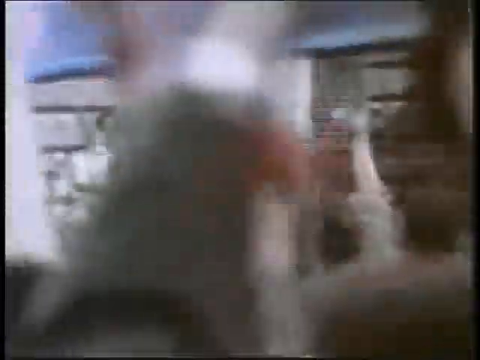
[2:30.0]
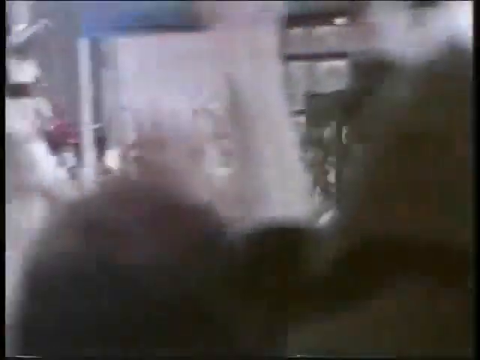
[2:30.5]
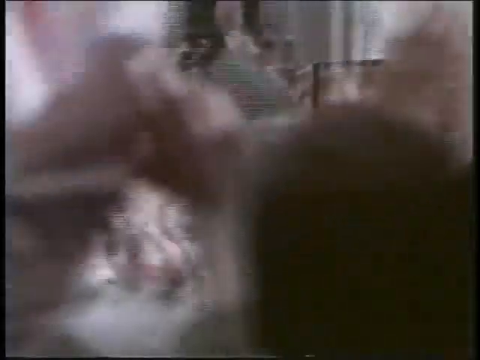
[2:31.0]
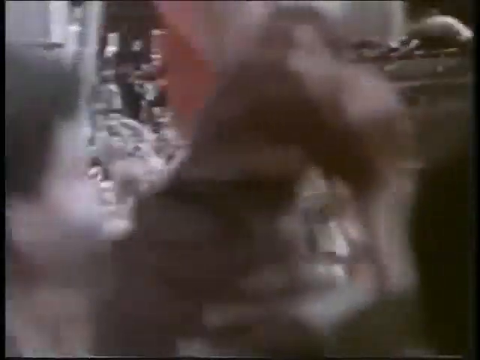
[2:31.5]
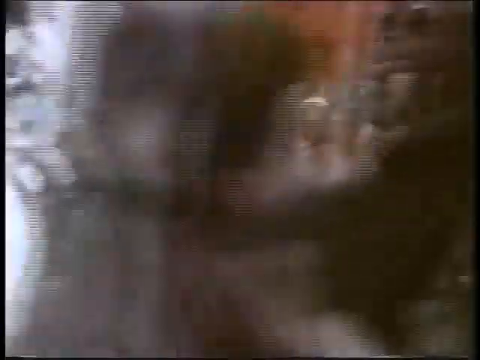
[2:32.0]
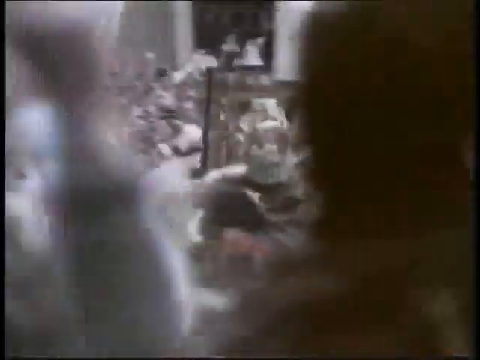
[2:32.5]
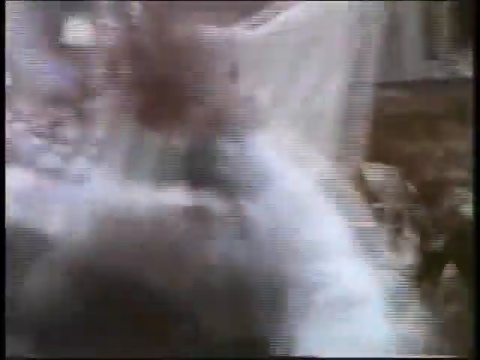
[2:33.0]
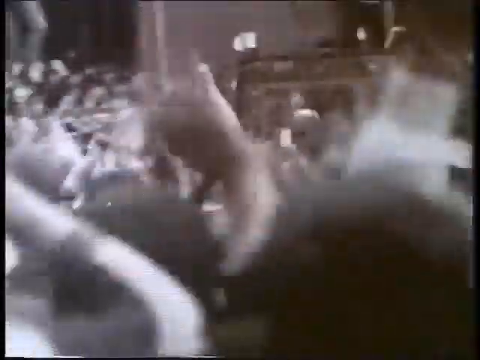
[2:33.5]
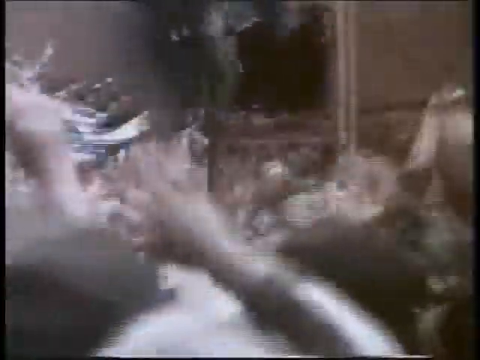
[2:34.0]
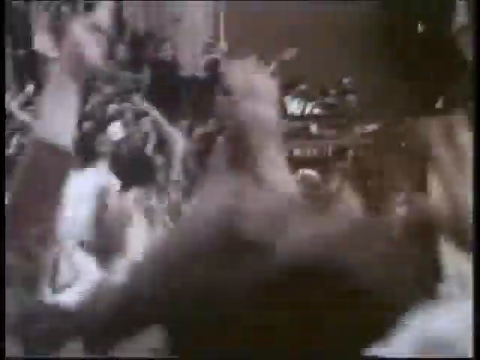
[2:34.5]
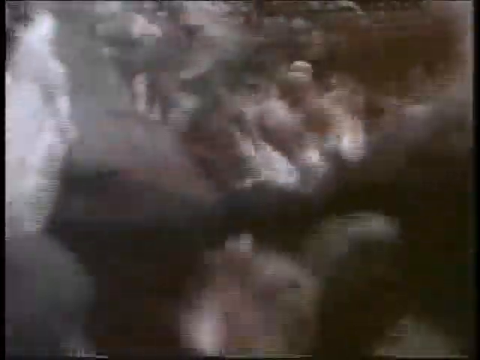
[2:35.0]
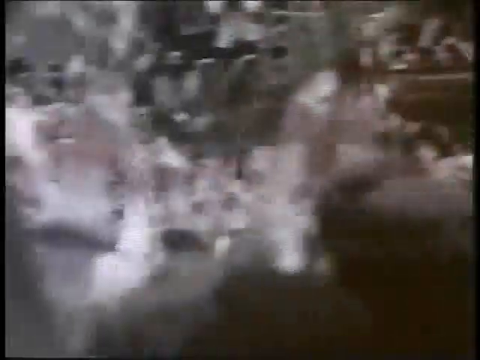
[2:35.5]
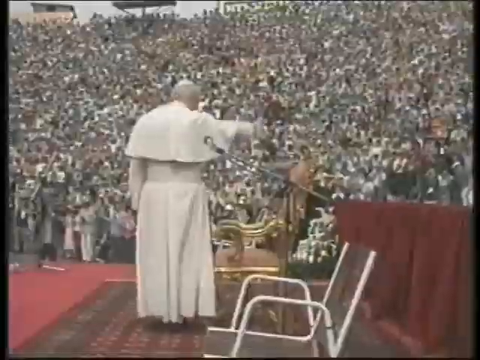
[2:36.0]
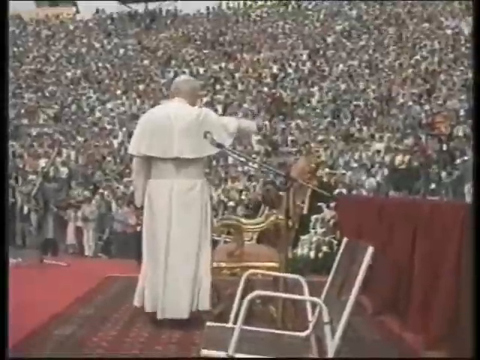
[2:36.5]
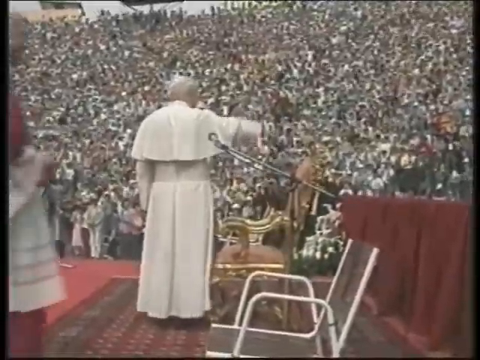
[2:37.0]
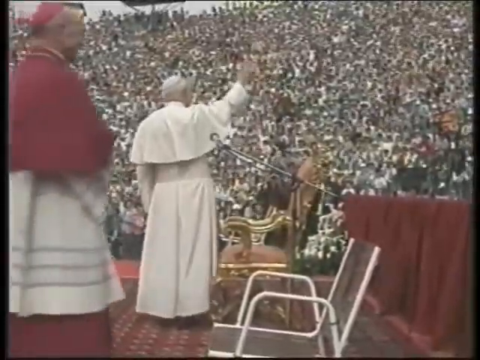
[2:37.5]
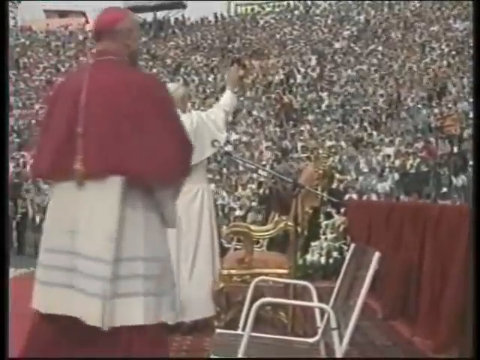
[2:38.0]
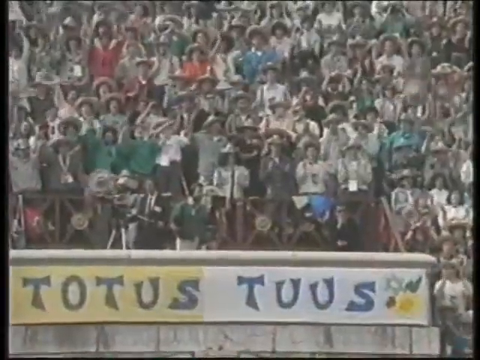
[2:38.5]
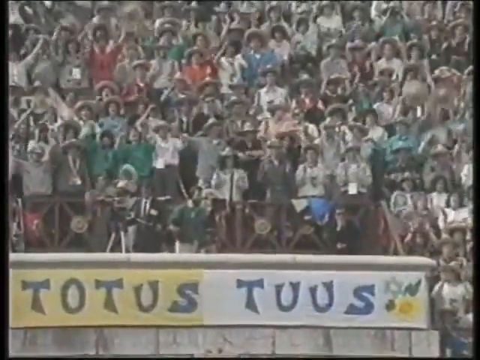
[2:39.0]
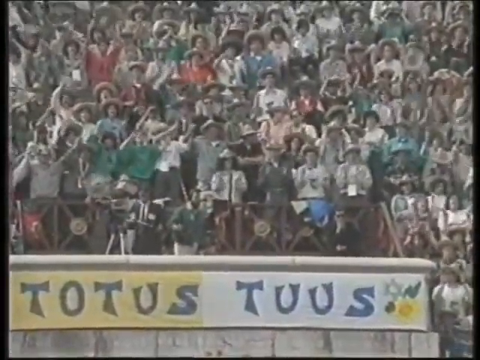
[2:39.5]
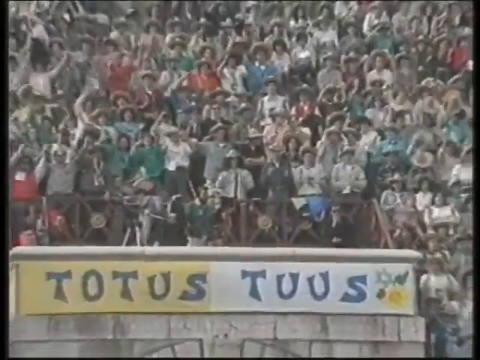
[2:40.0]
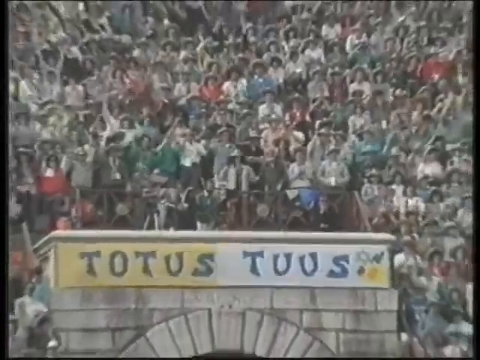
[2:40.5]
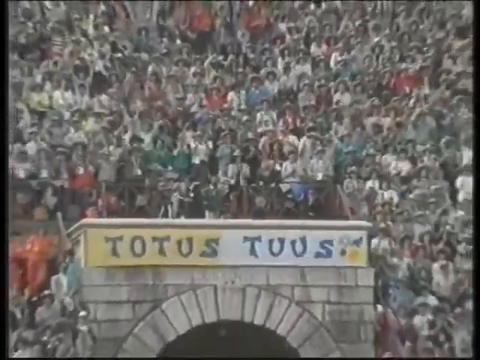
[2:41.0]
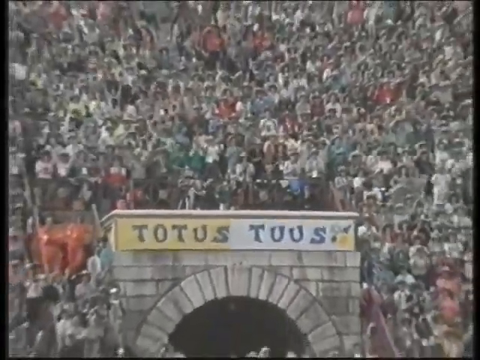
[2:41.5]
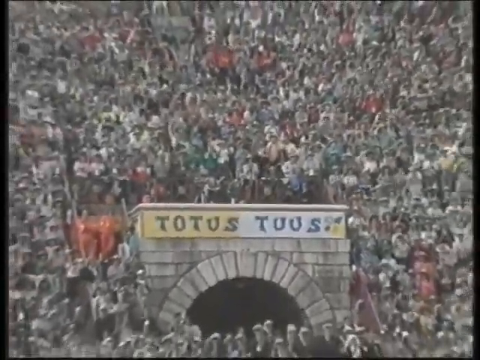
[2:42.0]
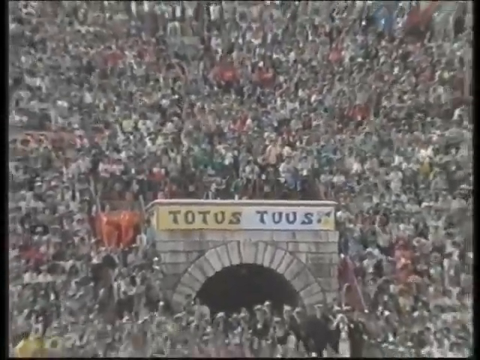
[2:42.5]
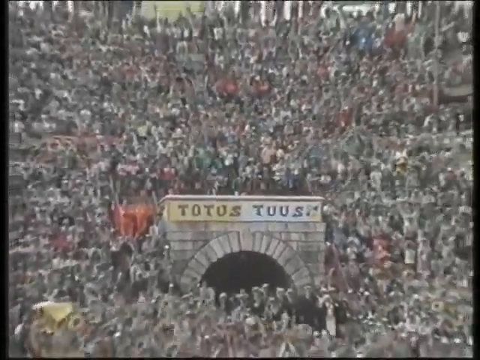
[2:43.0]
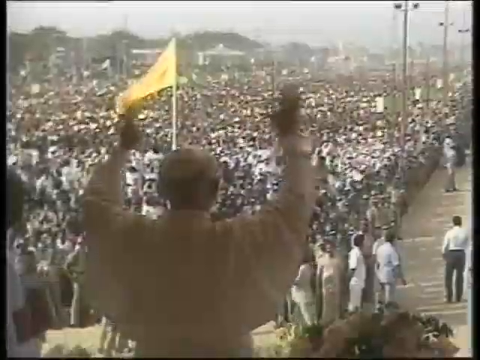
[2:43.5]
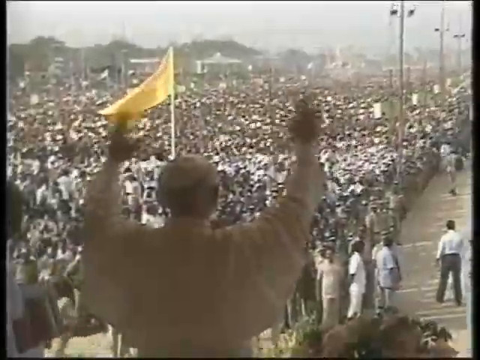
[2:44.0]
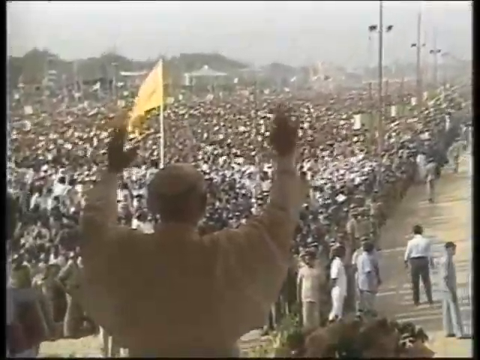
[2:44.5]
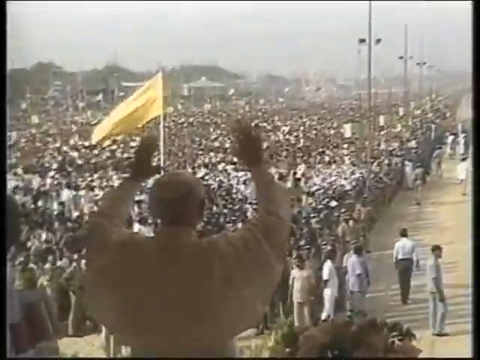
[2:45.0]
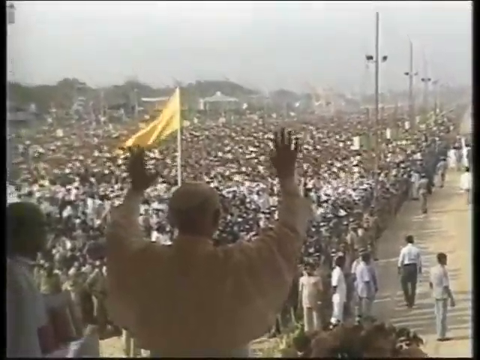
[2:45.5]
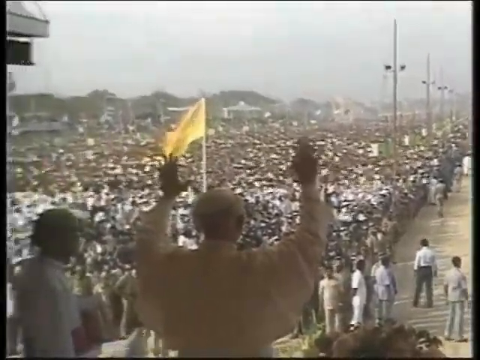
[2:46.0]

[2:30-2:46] The shot is taken close behind the heads of many people celebrating the Pope, and the camera pans from right to left, attempting to follow the procession. Many hands are clapping, and through the hands and the tops of people's heads the very top of the Pope's vehicle and the bulletproof glass are visible, with very faint glimpses of the Pope himself and a flash of his red shawl; his white skull cap is clearly visible as the camera pans through the arms and heads. Next, the Pope stands on a stage wearing all white, his shawl down just beyond his shoulders, over a long white robe; he has white hair and a skull cap. His left arm is by his side, and his right arm lifts straight out from the shoulder as he waves to crowds in the distance, in what could be a tiered seating area or a stadium, with the seating full. The scene flashes to a sign above an arched brick entranceway, with many people in the crowd waving. The camera pans out, and the crowds fill the scene. Finally, an image shows a figure with both hands aloft behind his head.